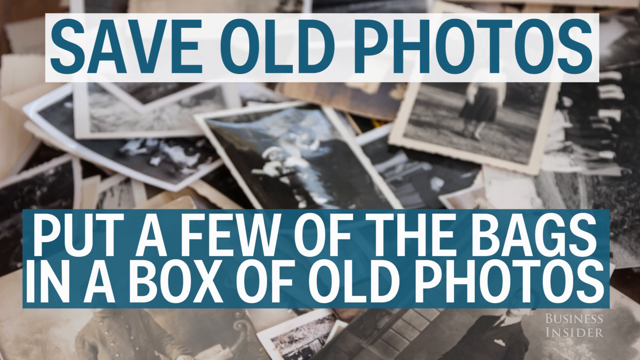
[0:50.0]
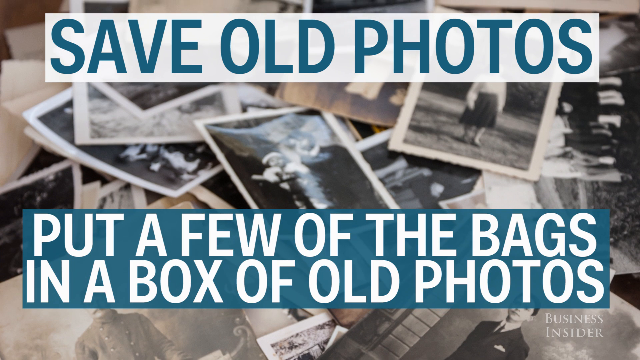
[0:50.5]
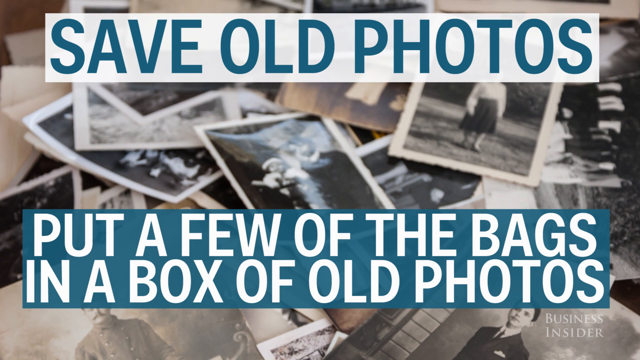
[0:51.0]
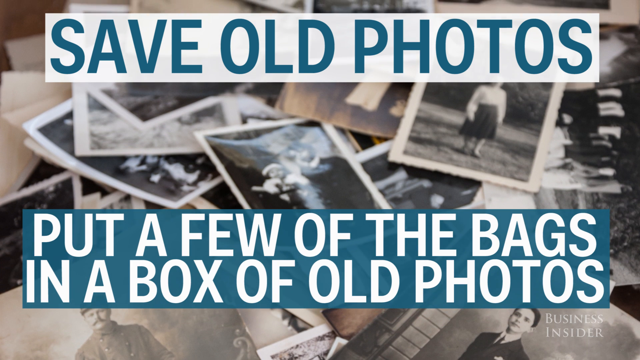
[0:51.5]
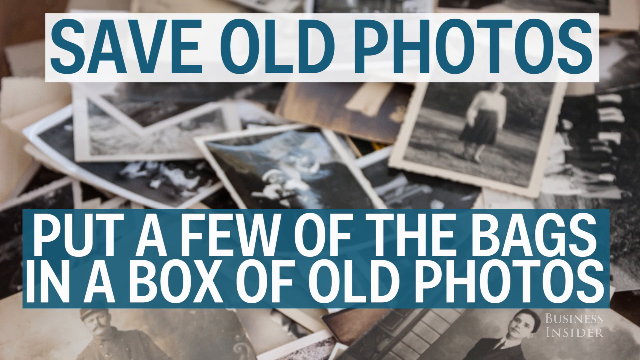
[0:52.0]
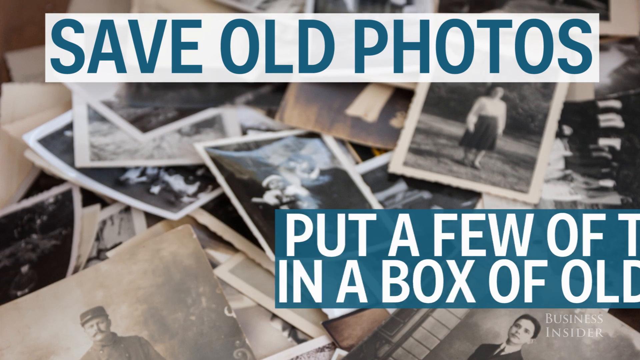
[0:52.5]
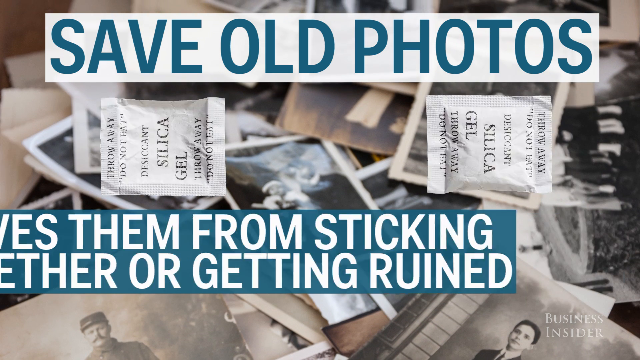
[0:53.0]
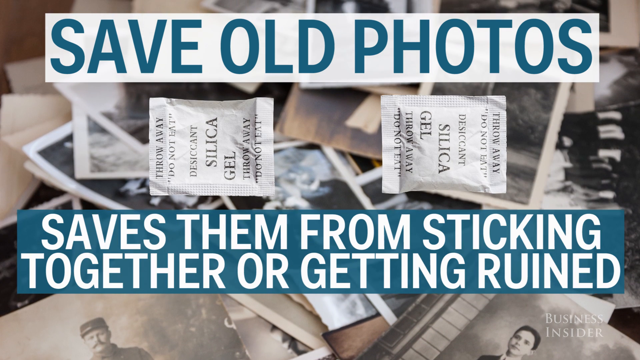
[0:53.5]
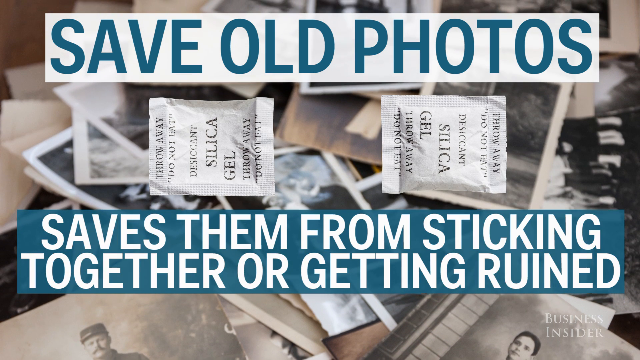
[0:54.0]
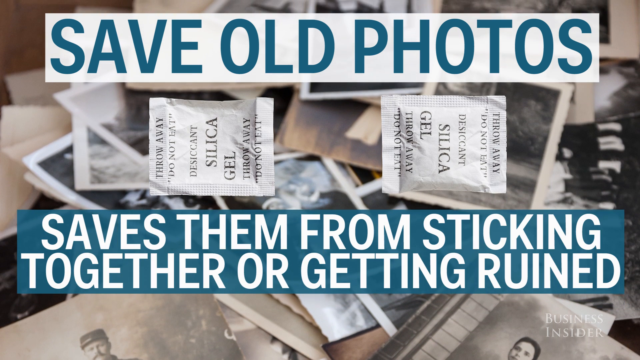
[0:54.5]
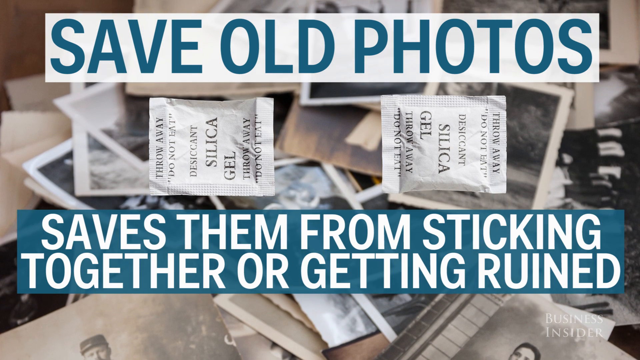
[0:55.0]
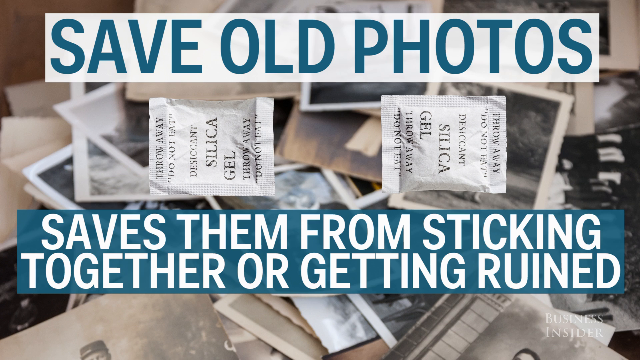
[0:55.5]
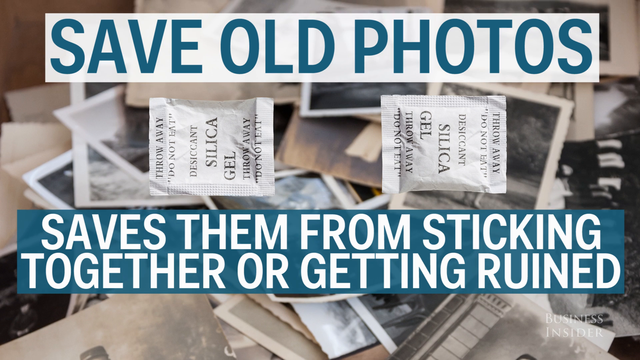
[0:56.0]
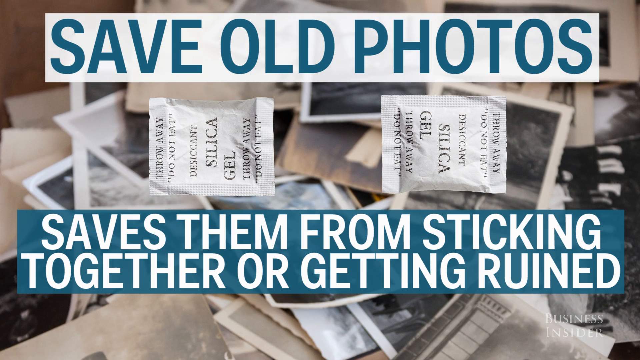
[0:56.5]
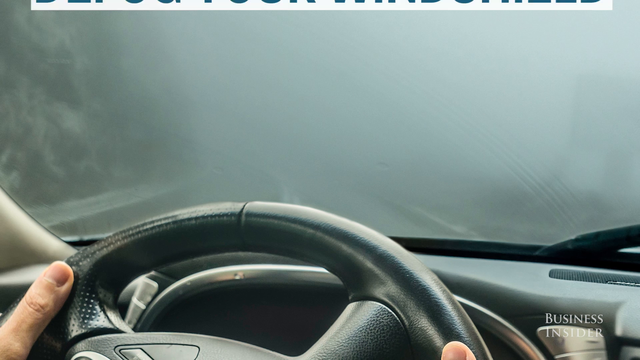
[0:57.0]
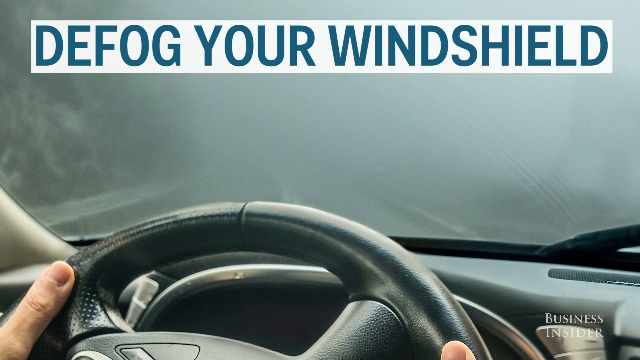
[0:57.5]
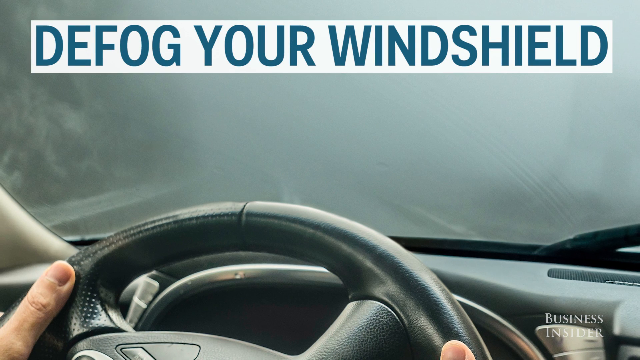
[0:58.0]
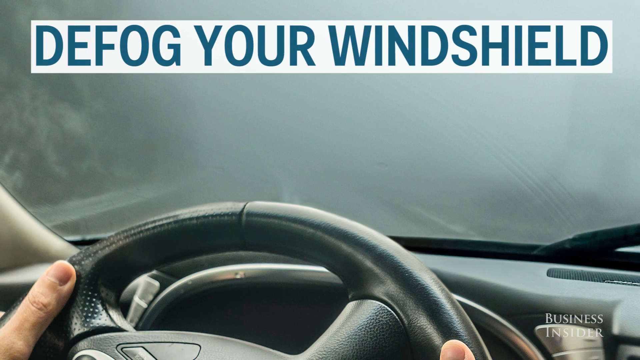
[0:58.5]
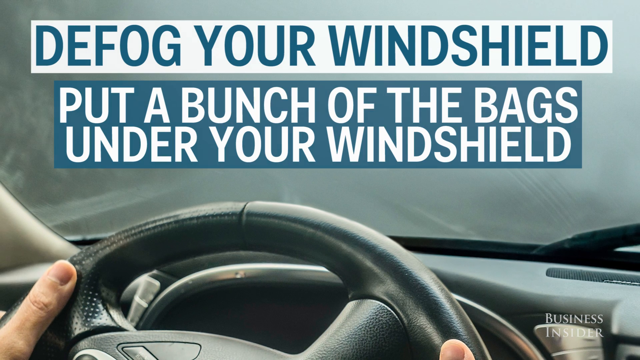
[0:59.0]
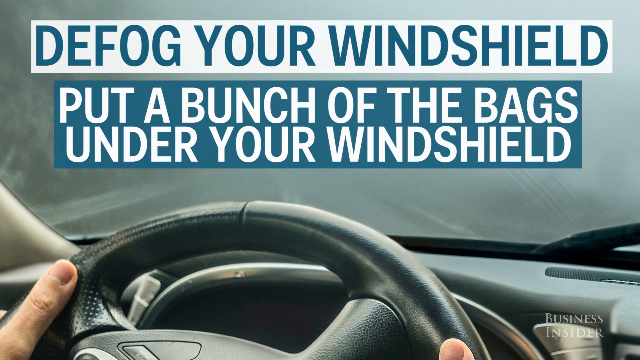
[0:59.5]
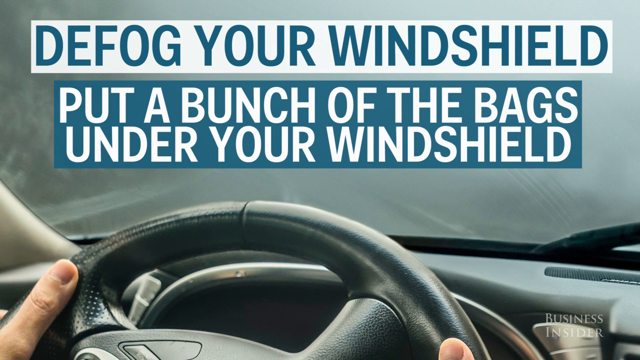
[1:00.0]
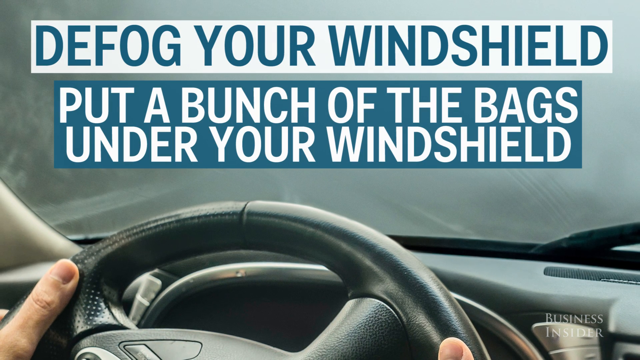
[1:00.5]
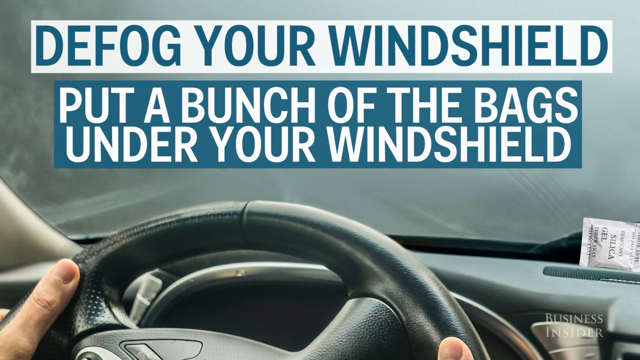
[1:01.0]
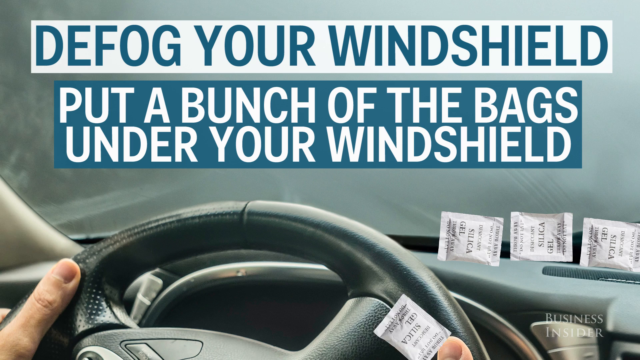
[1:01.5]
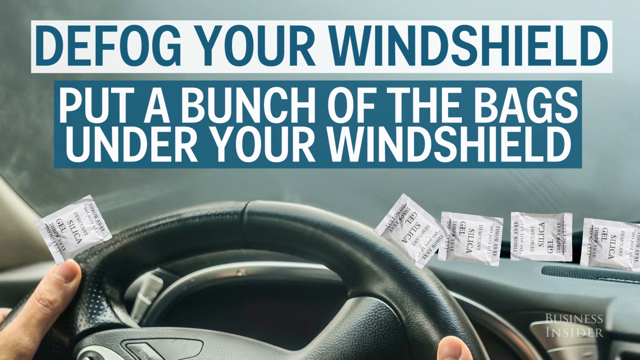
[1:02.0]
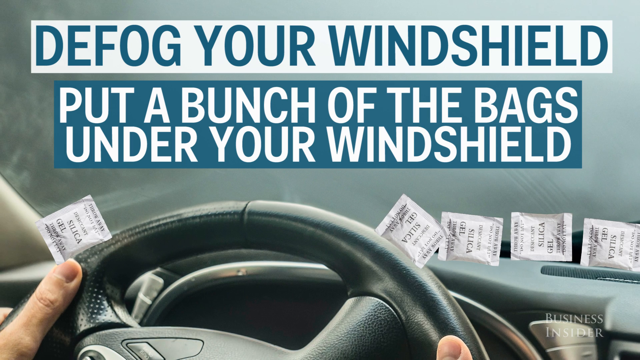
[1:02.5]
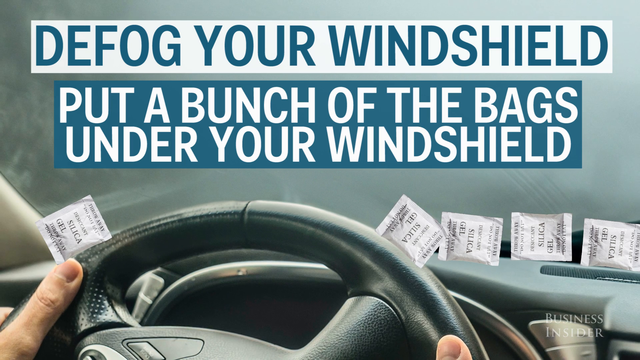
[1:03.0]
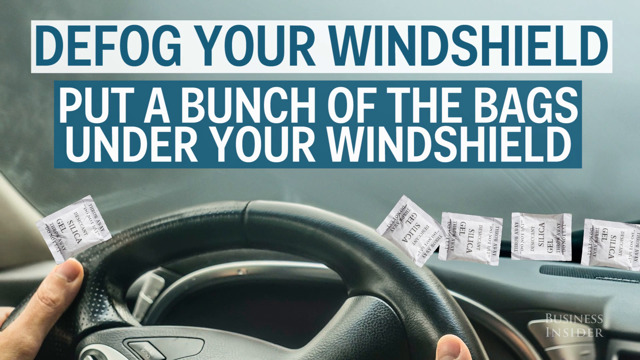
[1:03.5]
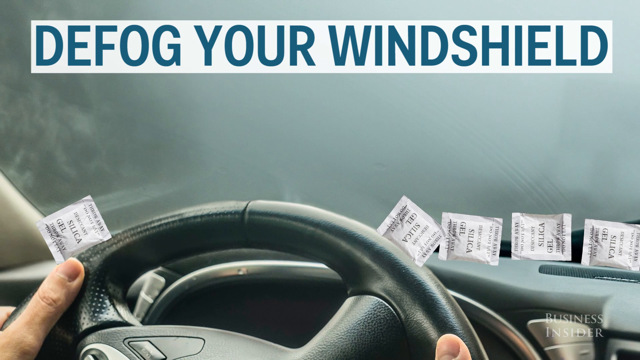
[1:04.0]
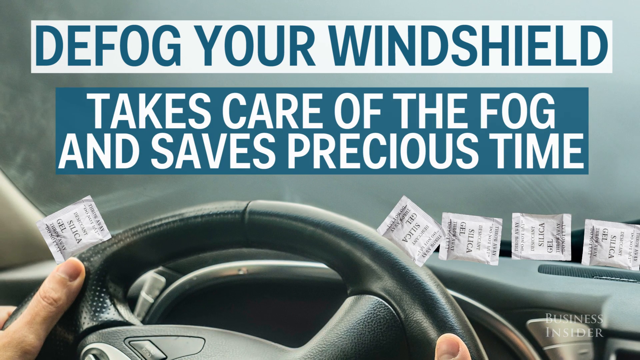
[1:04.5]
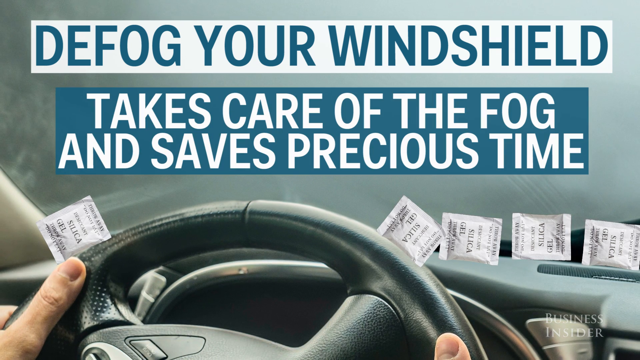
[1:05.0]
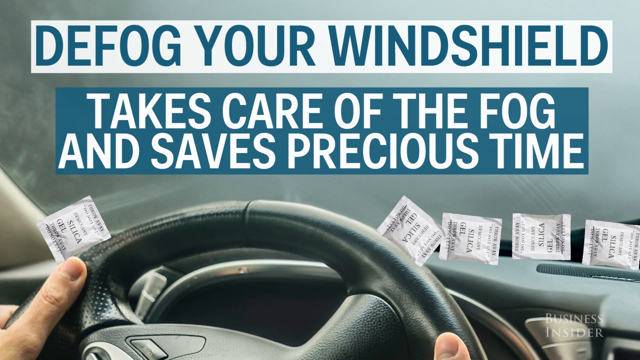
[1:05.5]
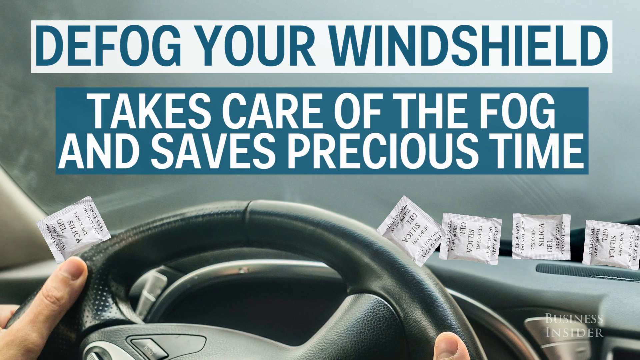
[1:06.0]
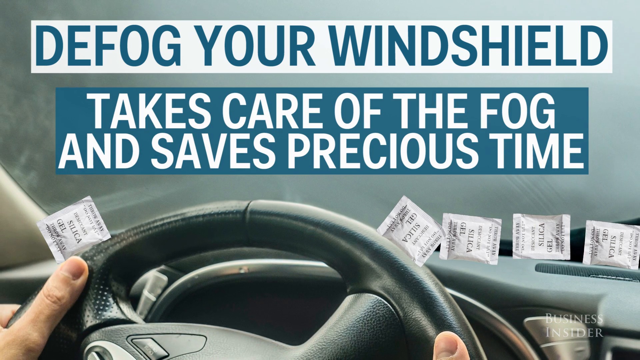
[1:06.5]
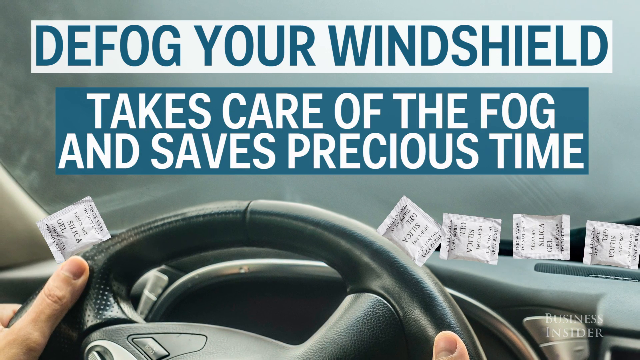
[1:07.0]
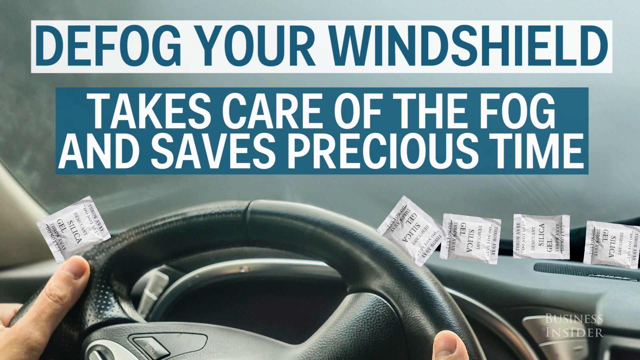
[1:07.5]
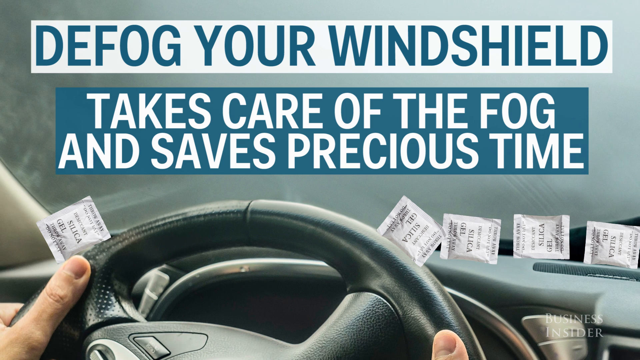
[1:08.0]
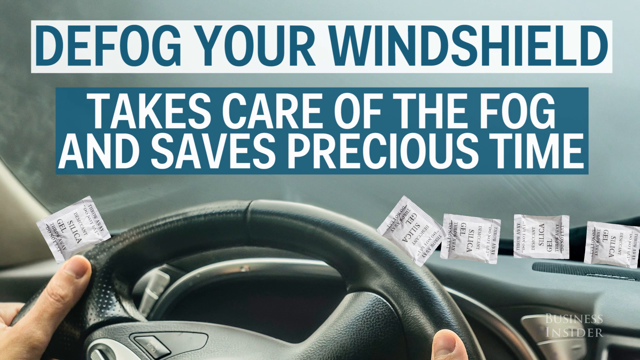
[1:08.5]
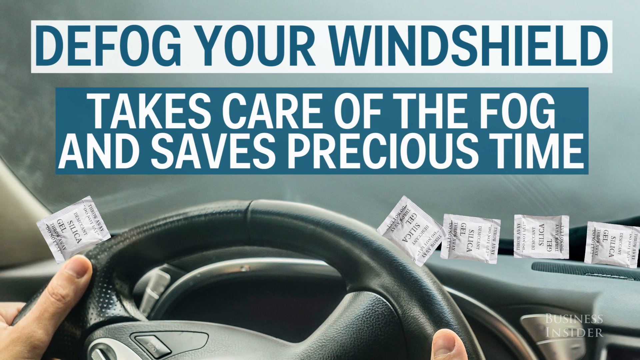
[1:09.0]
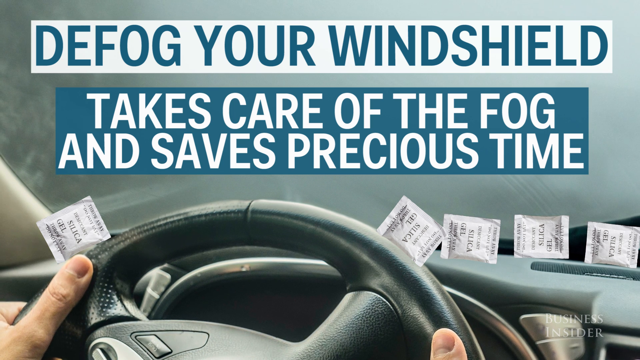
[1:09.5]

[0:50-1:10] For saving old photos, the directions say to put a few of the bags in an old box of photos, with the reason given that this keeps the photos from sticking together or getting ruined. The next use shown is defogging a car's windshield: the video displays a car's windshield, and the directions are to put a bunch of the bags under the windshield, with the reason given that it takes care of the fog and saves precious time. Each of these examples is accompanied by images and visuals of how the silica gel can be used, alongside the text.